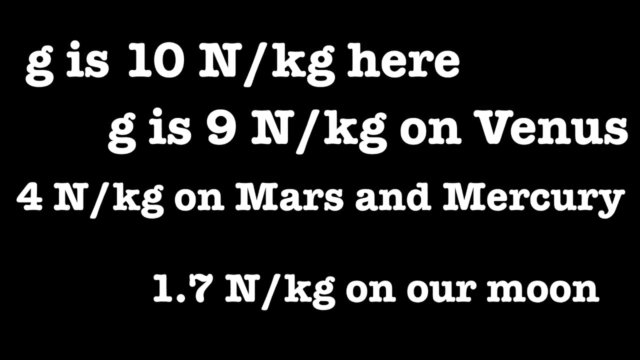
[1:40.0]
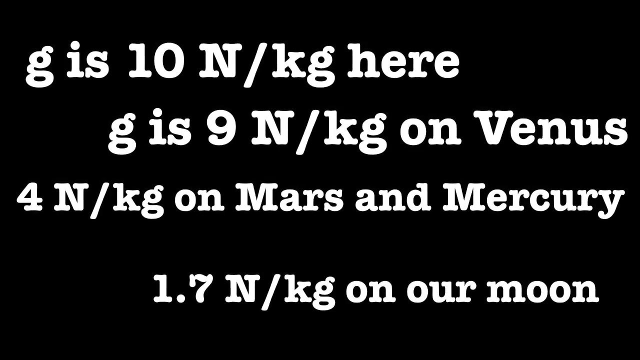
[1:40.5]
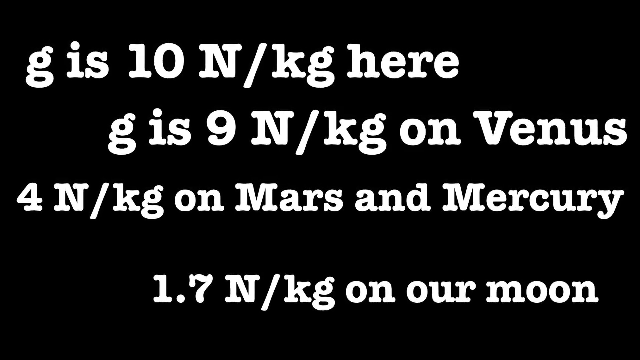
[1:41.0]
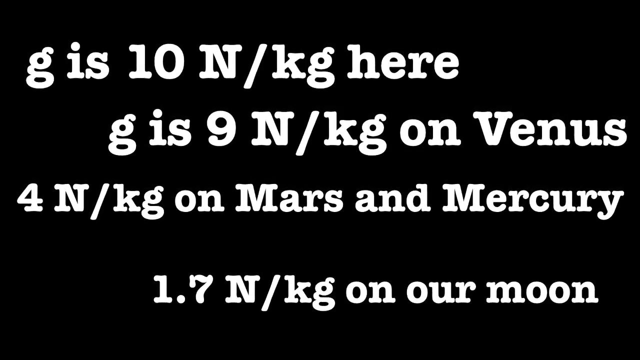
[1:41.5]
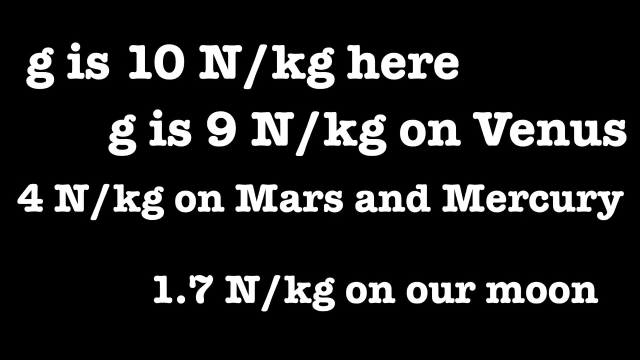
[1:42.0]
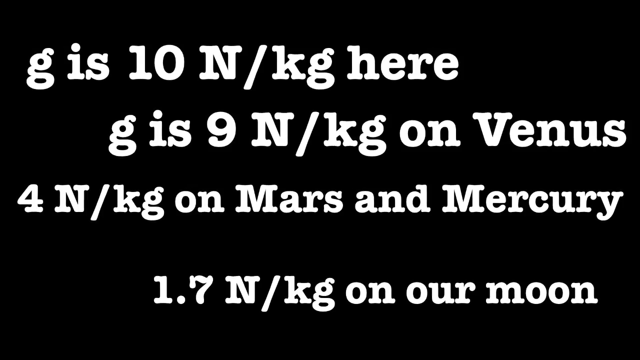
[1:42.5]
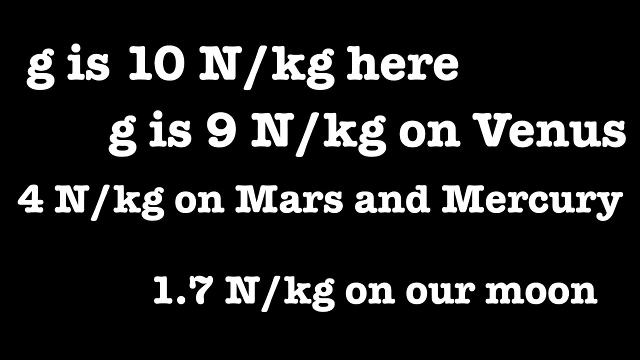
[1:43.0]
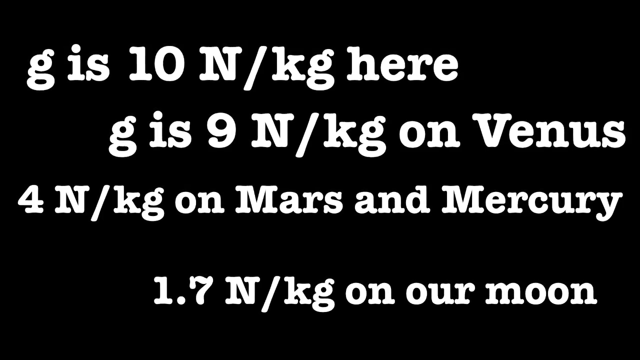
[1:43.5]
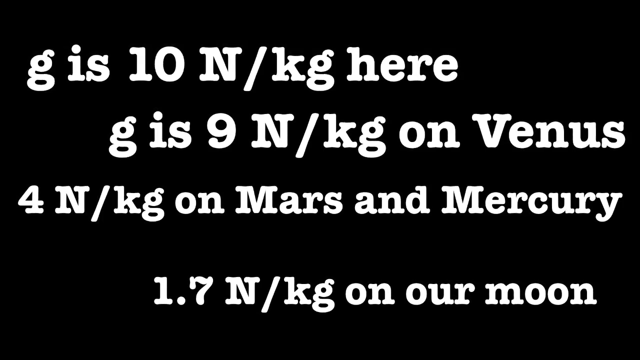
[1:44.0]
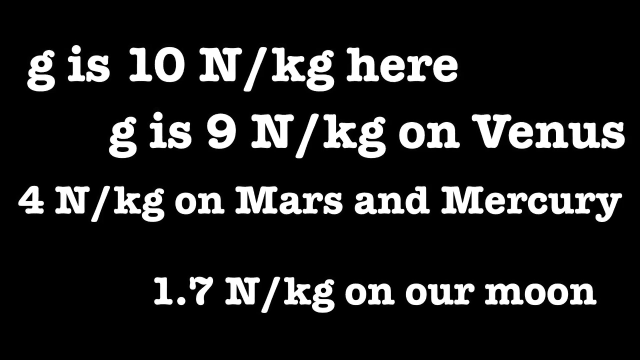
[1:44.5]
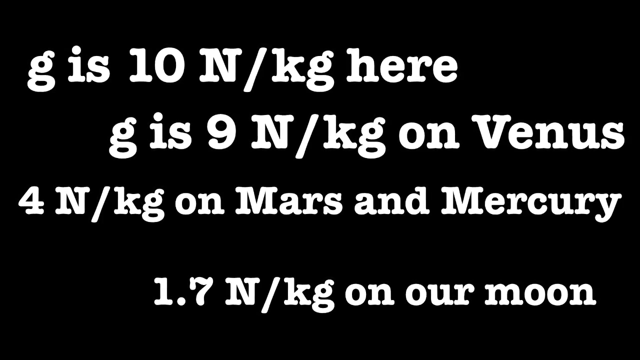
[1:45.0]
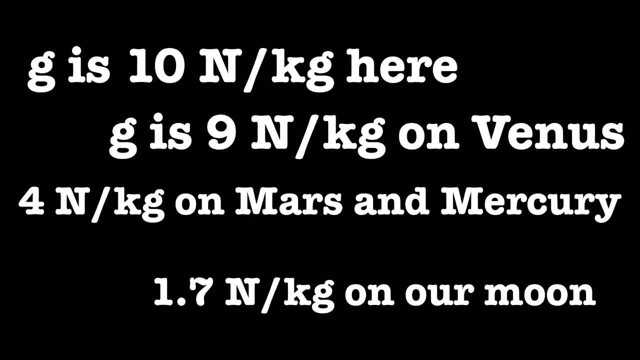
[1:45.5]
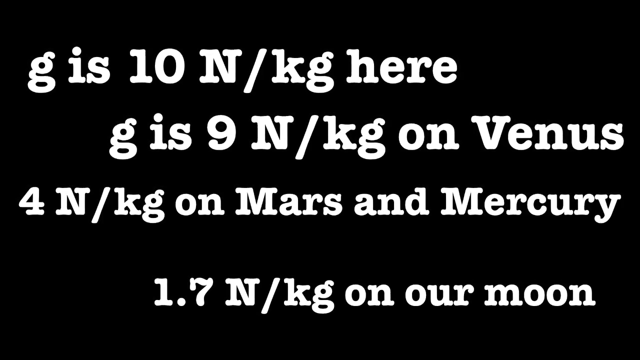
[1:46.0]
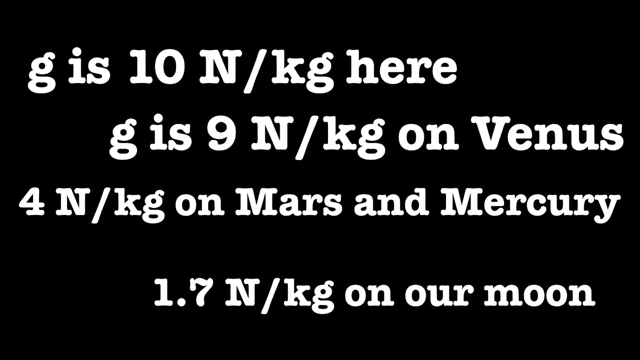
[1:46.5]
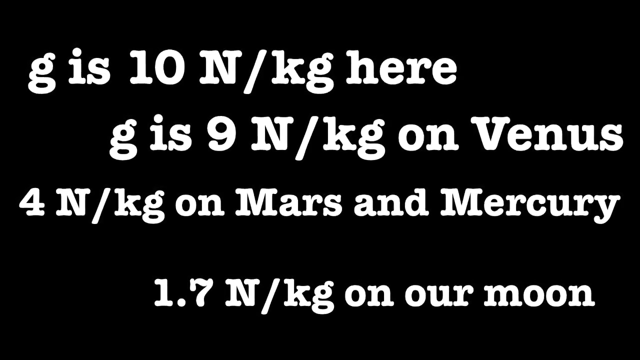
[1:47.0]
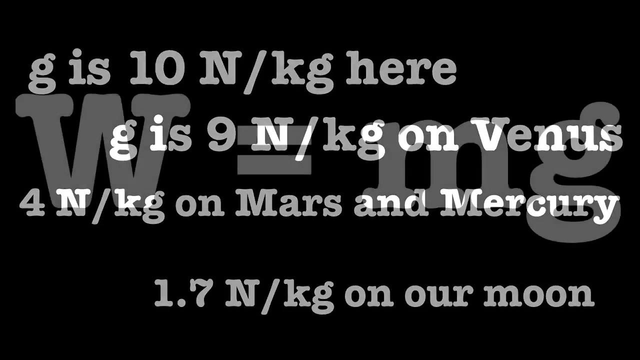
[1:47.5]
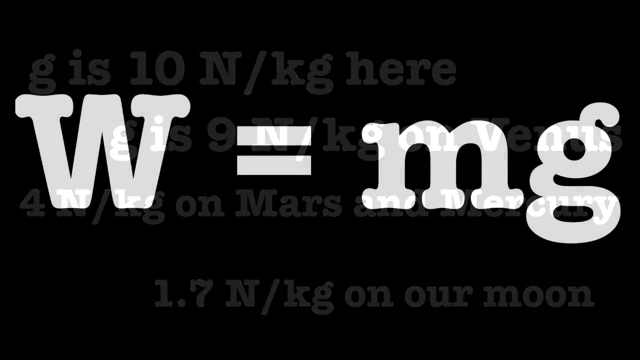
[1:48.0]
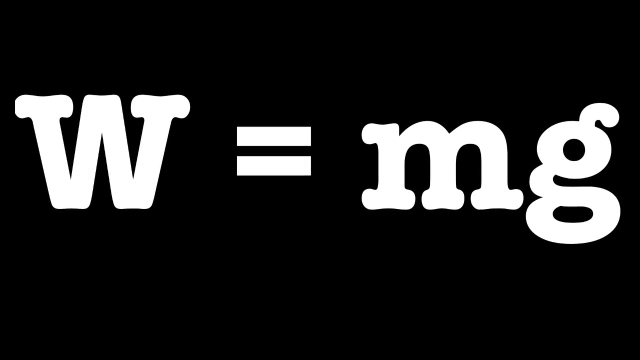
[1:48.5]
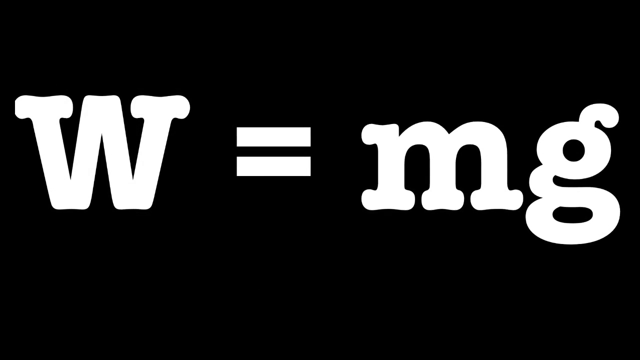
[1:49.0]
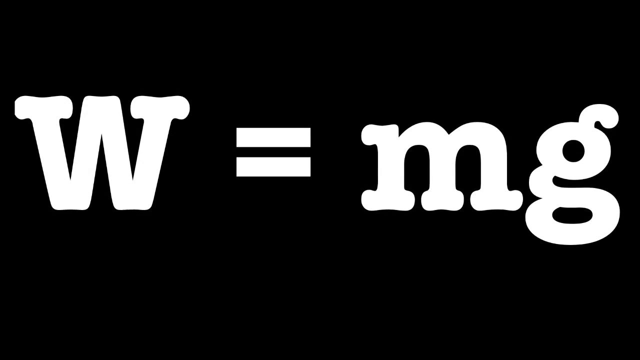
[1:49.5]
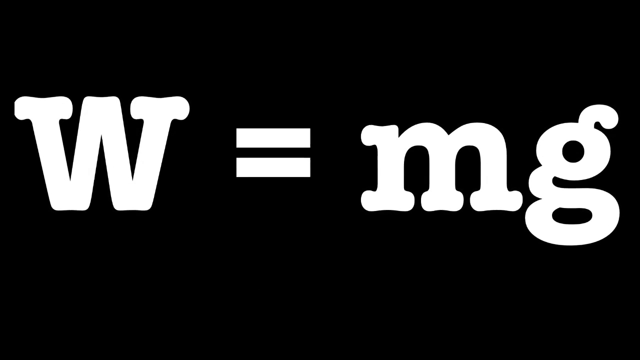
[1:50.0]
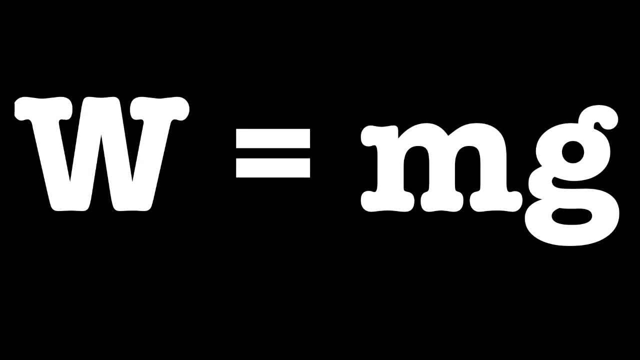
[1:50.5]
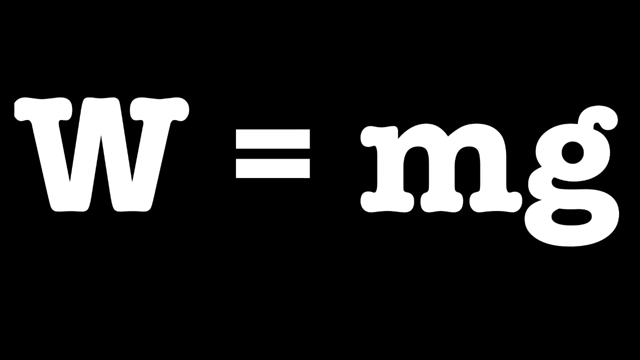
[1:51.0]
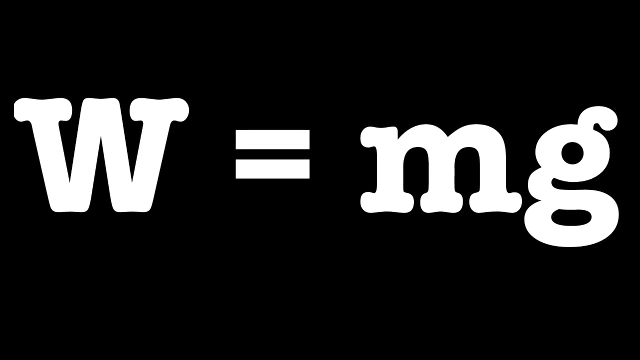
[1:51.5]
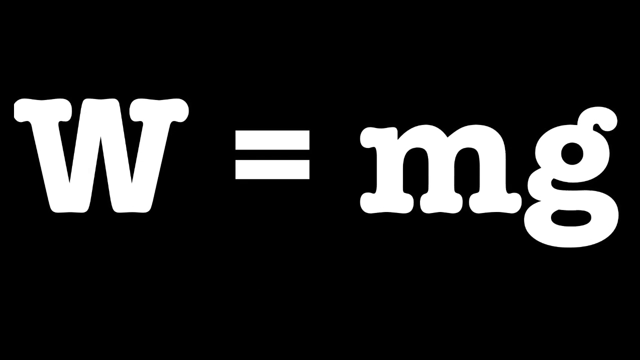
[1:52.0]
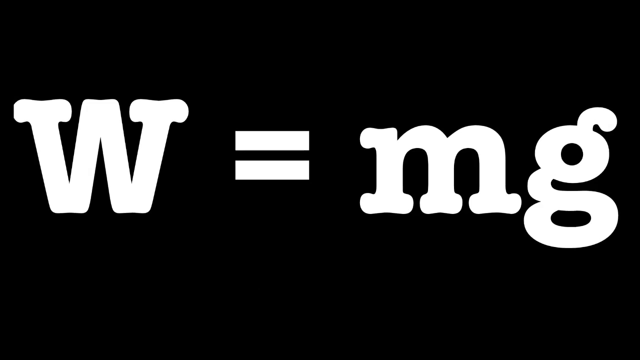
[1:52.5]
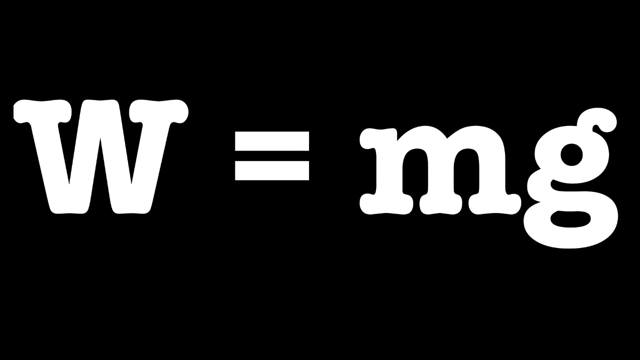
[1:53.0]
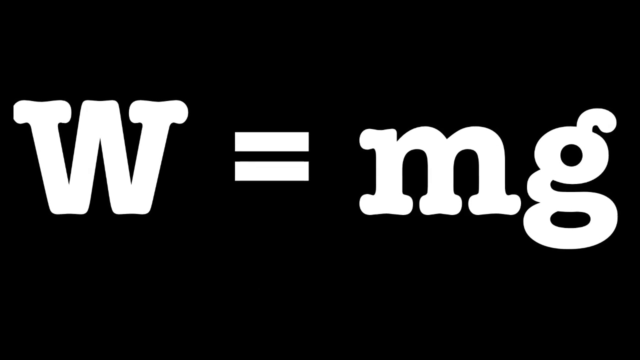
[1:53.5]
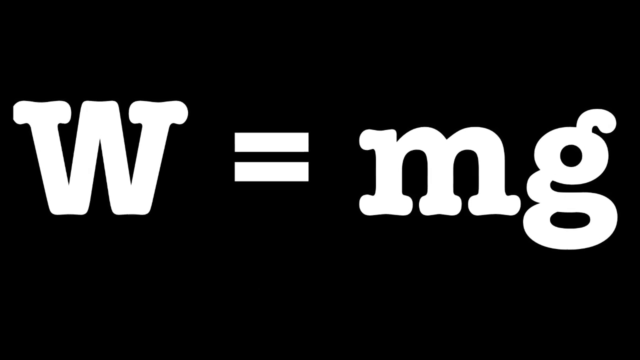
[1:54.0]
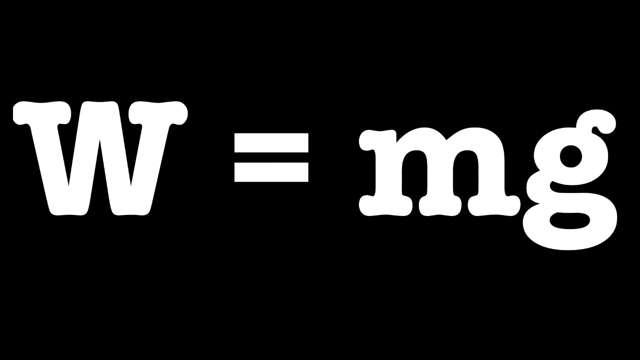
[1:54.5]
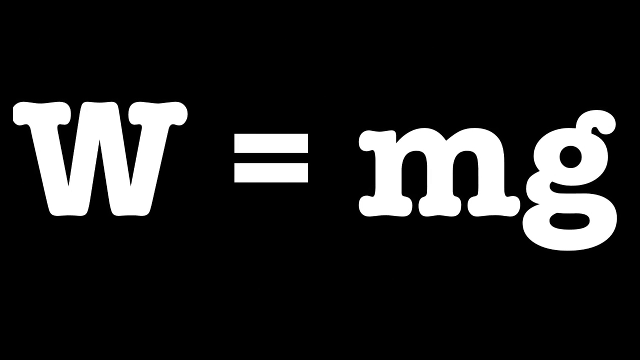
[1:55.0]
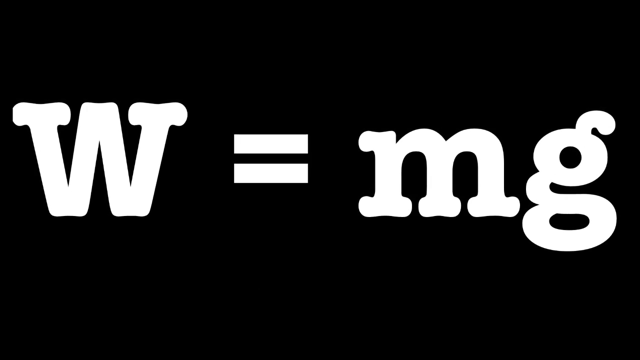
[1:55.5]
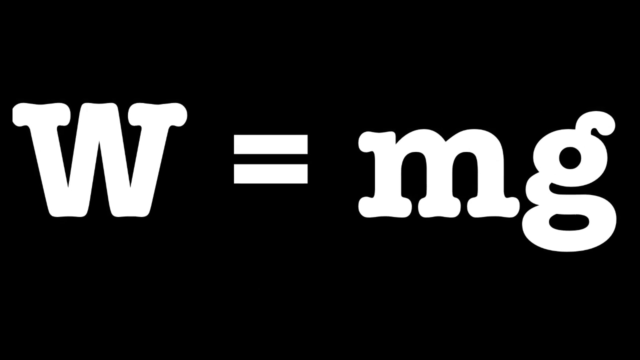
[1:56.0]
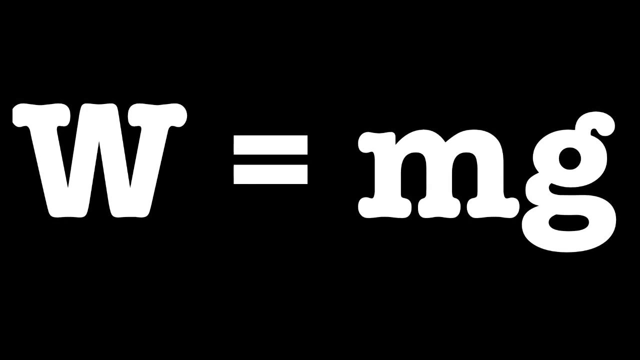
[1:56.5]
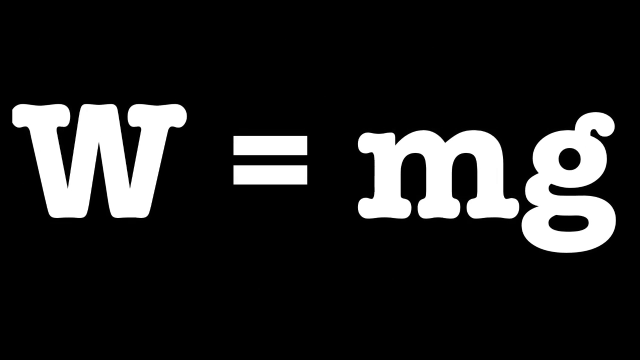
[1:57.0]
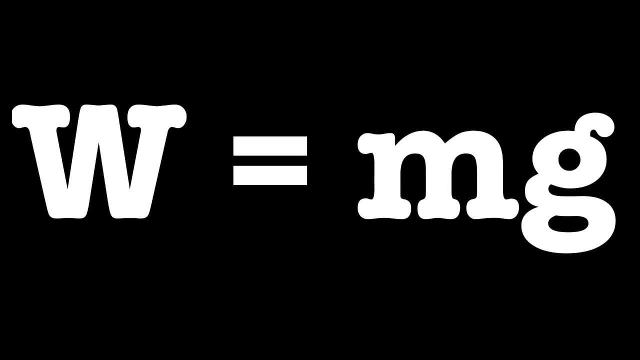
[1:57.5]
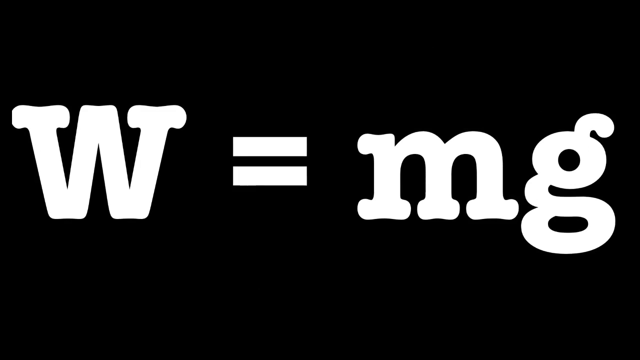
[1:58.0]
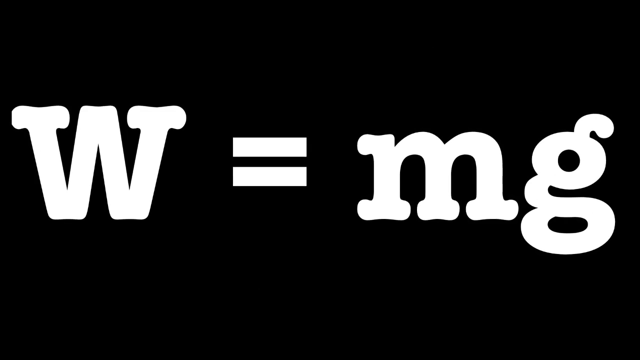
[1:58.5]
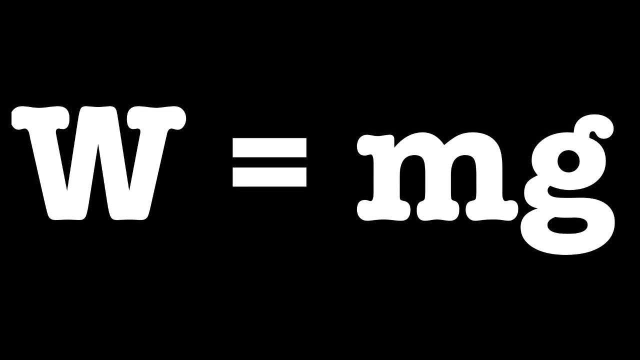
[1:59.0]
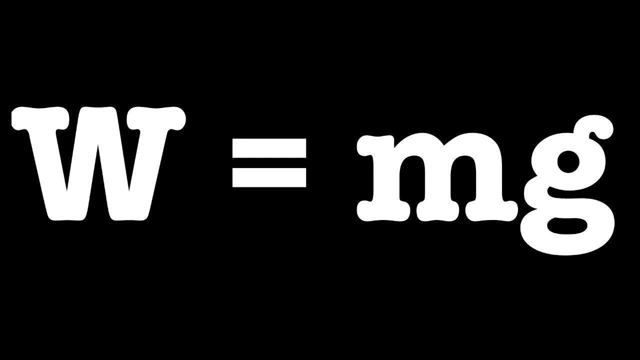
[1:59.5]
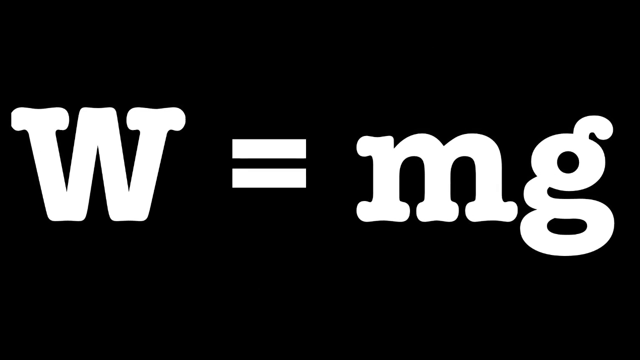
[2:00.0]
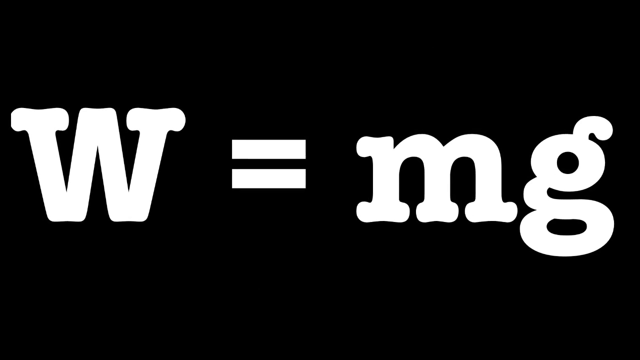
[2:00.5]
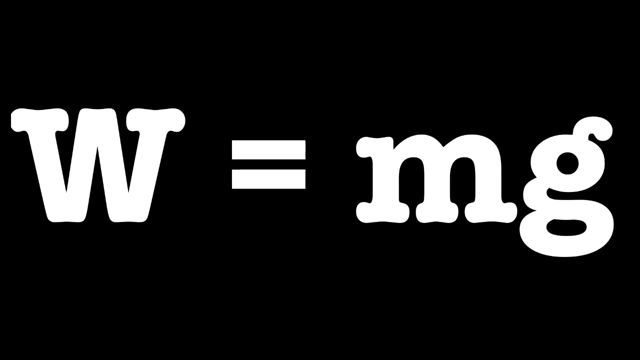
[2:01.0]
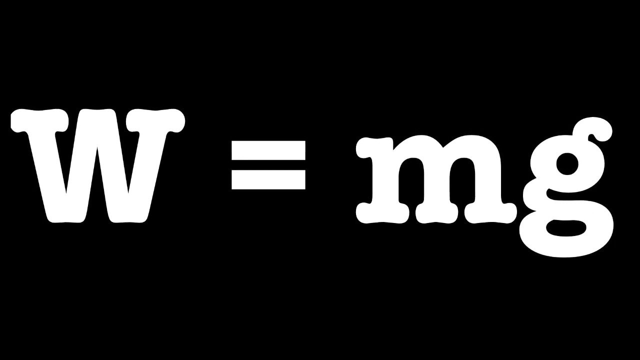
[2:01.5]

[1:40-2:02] A black screen reads at the top "g is 10 N/kg here," with "g is 9 N/kg on Venus," "4 N/kg on Mars and Mercury" and "1.7 N/kg on our moon" listed below. The video switches to a black screen with large white letters reading "W = mg," with the equals written as an equal sign. This stays on the screen for several seconds without moving, and then the video switches back to the screen listing the values of g. All the g's are lowercase, the N is uppercase, kg is lowercase, the W is uppercase, and mg is lowercase.